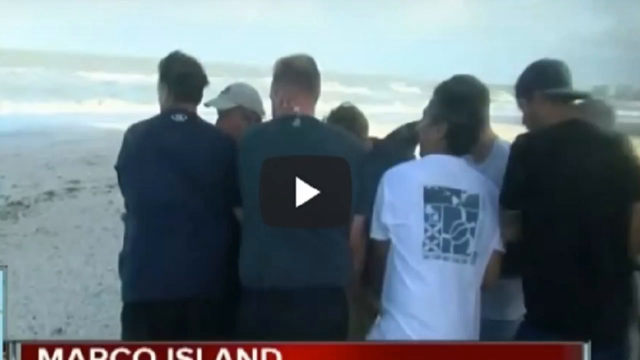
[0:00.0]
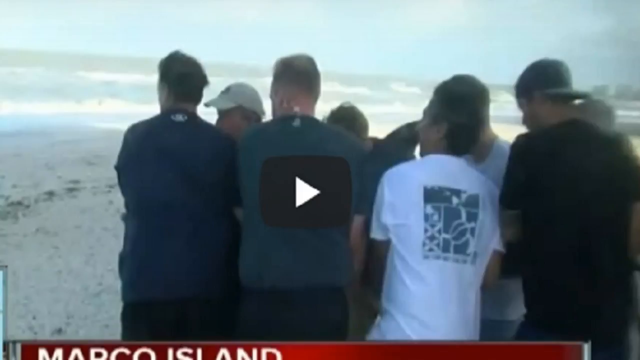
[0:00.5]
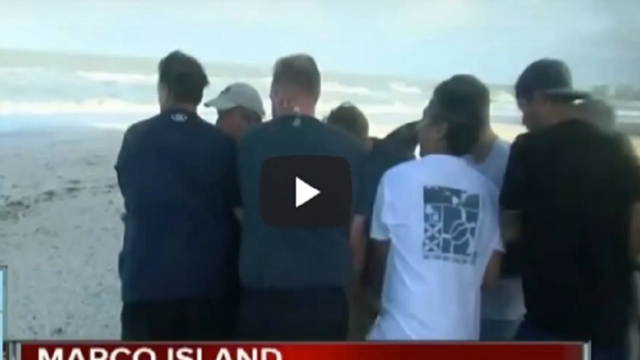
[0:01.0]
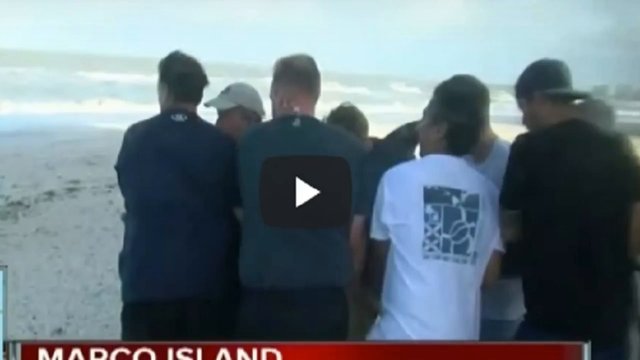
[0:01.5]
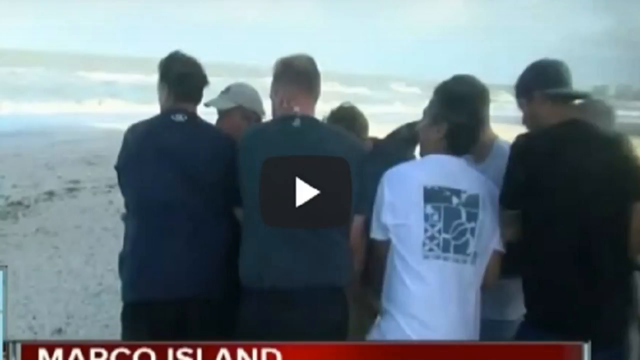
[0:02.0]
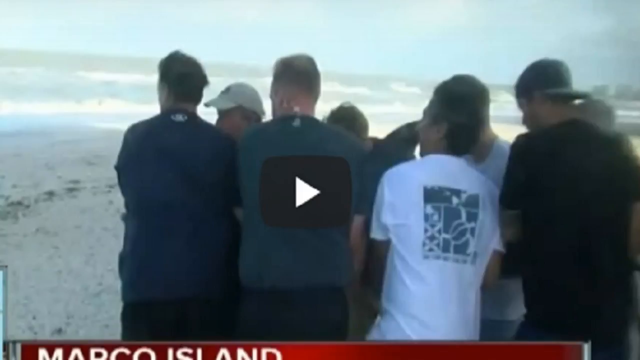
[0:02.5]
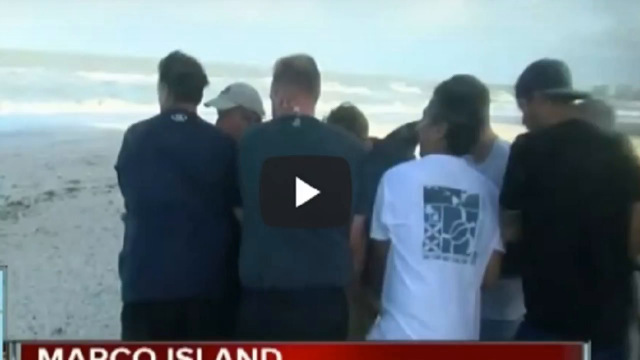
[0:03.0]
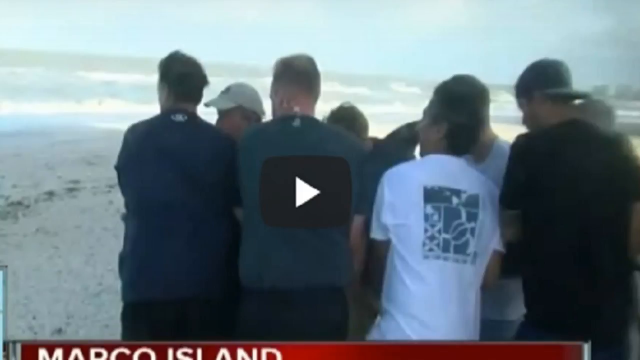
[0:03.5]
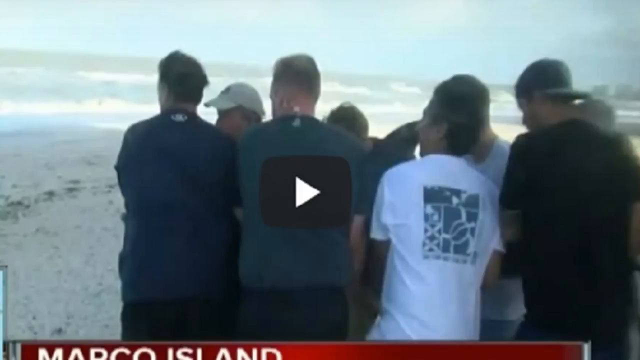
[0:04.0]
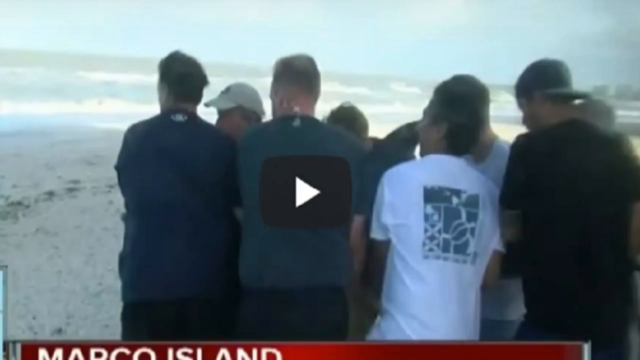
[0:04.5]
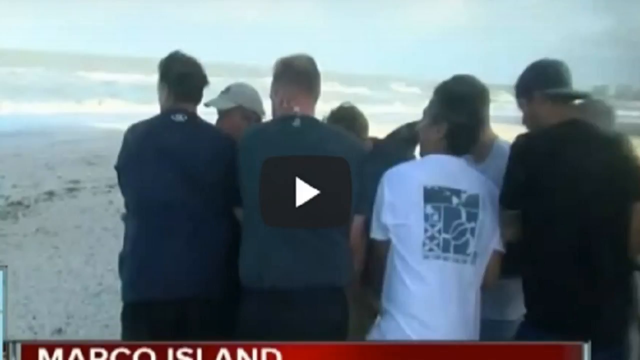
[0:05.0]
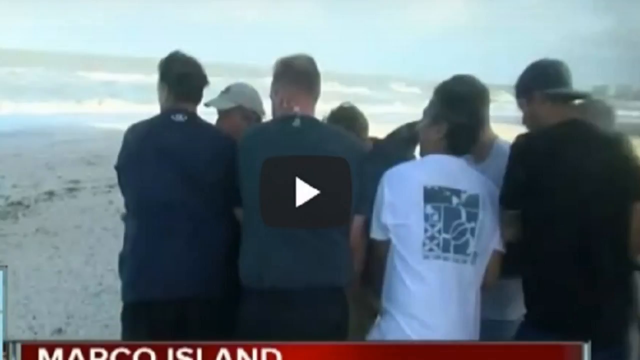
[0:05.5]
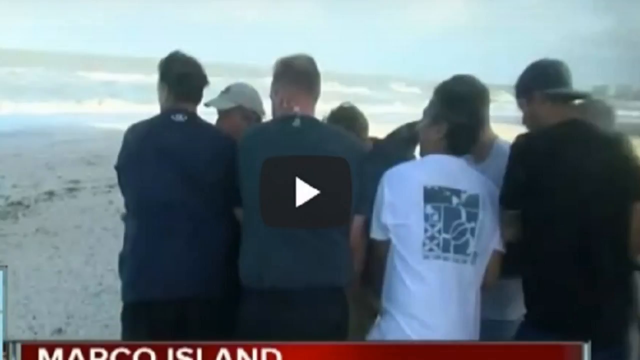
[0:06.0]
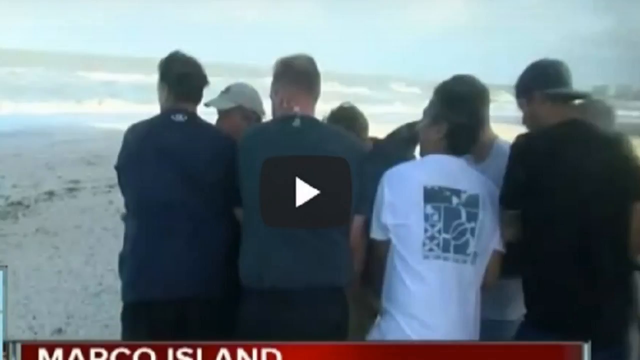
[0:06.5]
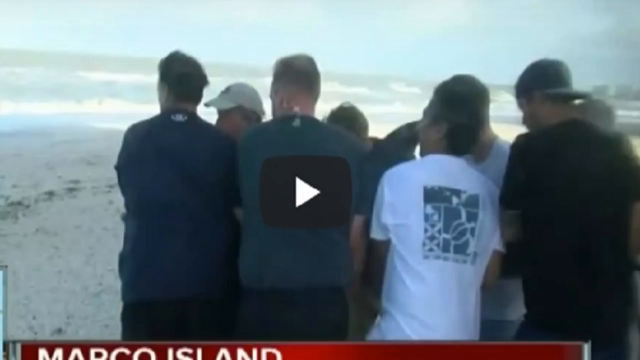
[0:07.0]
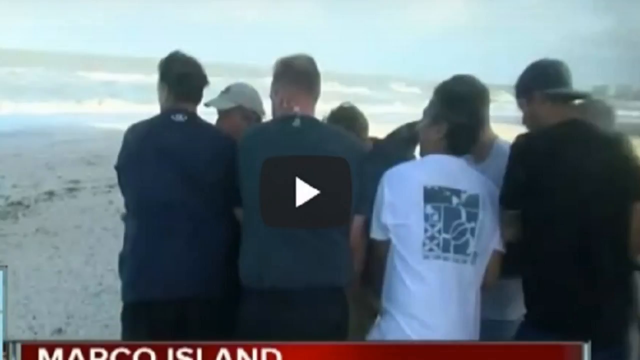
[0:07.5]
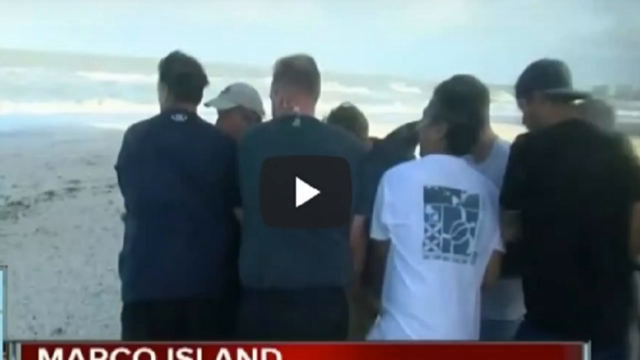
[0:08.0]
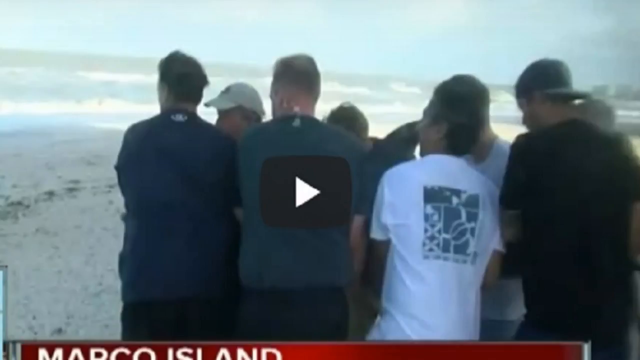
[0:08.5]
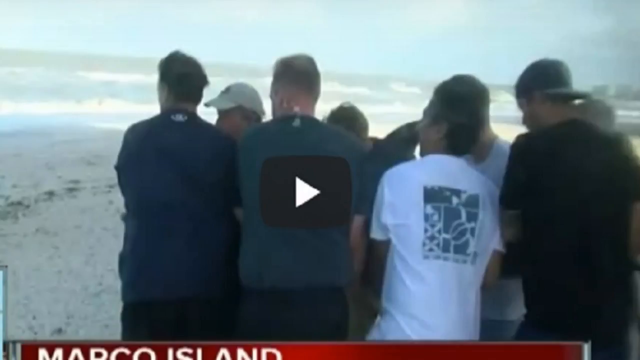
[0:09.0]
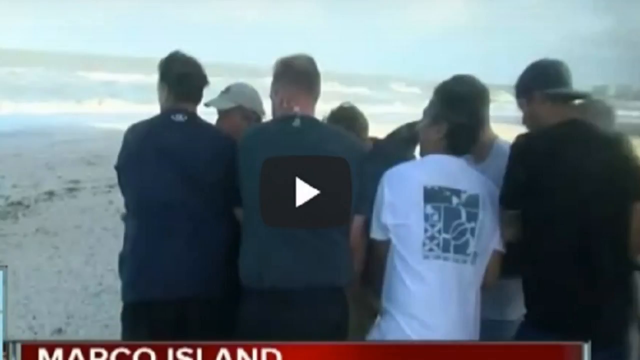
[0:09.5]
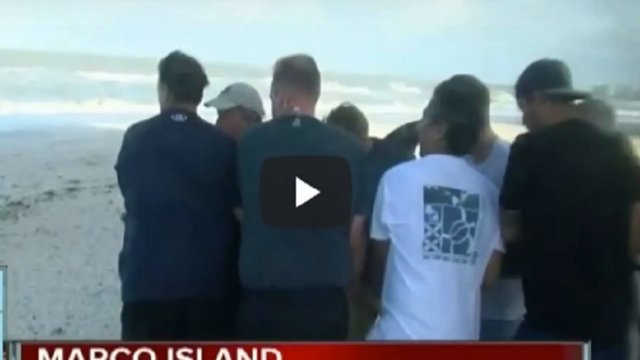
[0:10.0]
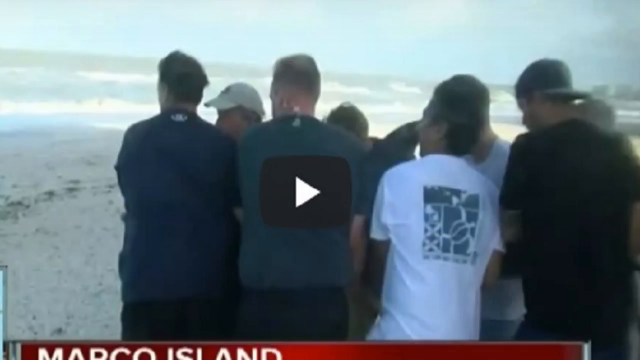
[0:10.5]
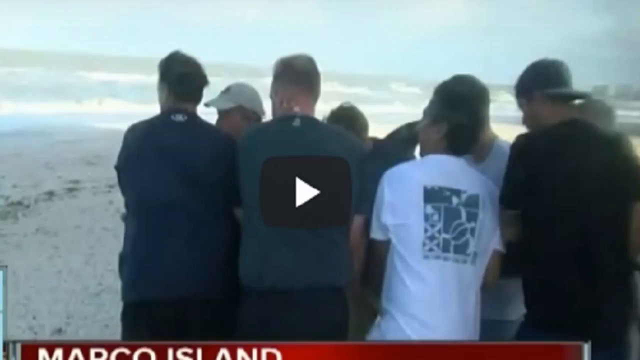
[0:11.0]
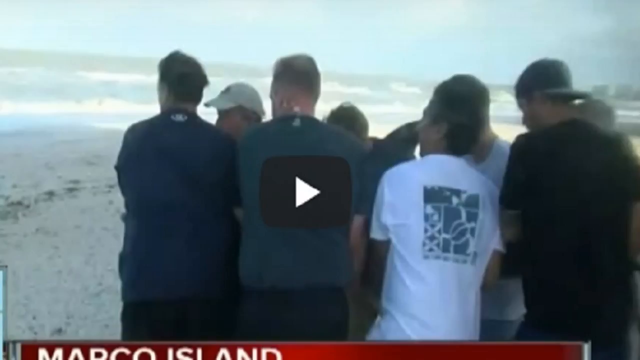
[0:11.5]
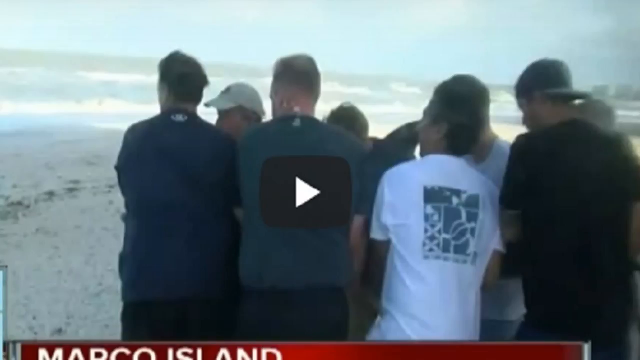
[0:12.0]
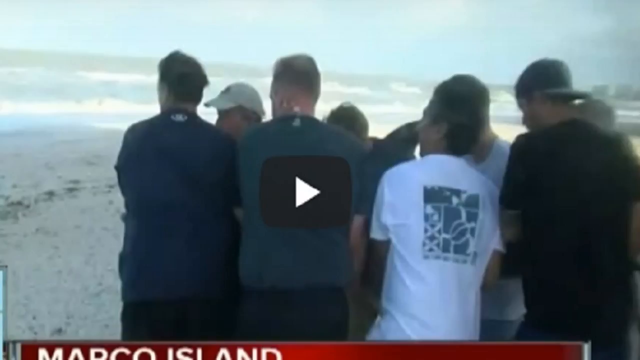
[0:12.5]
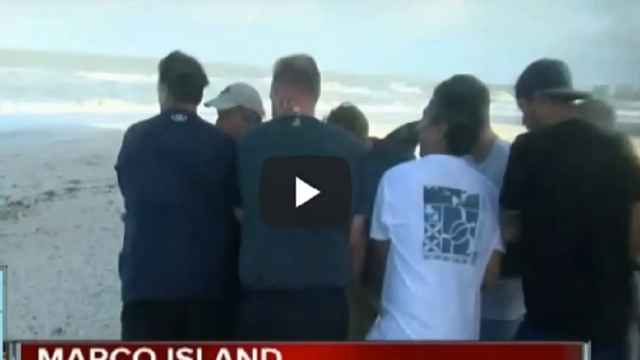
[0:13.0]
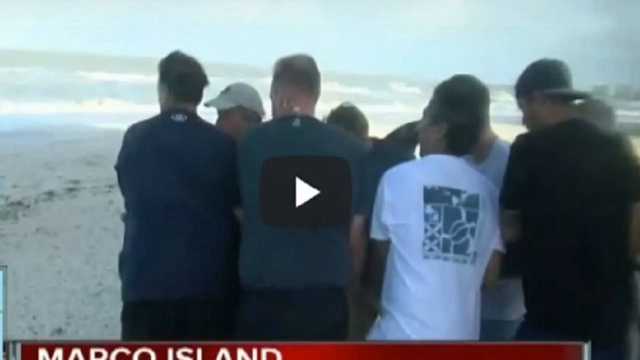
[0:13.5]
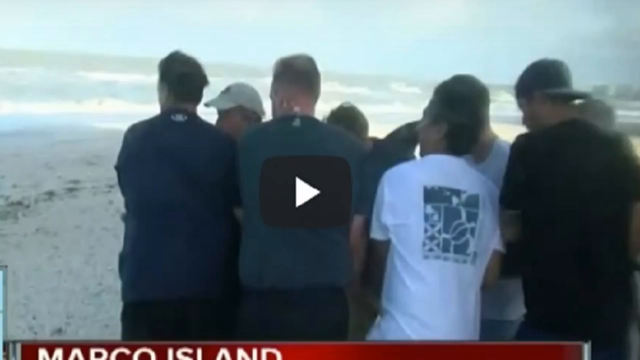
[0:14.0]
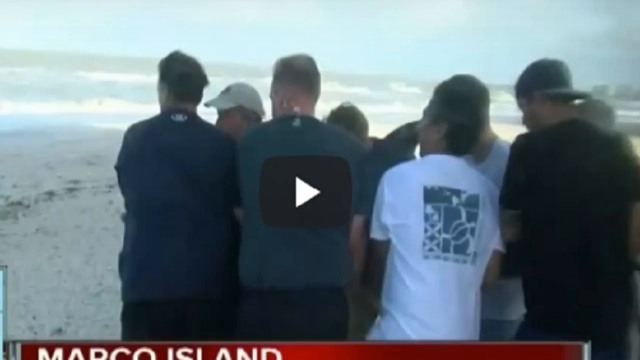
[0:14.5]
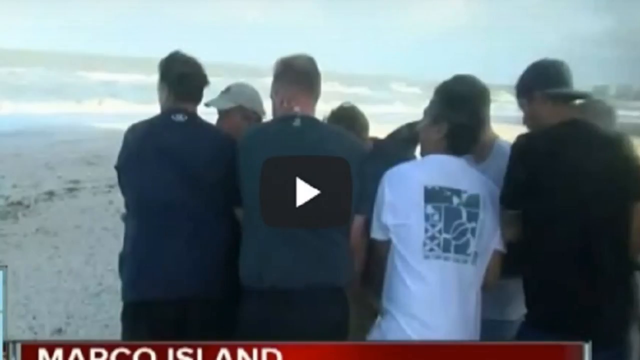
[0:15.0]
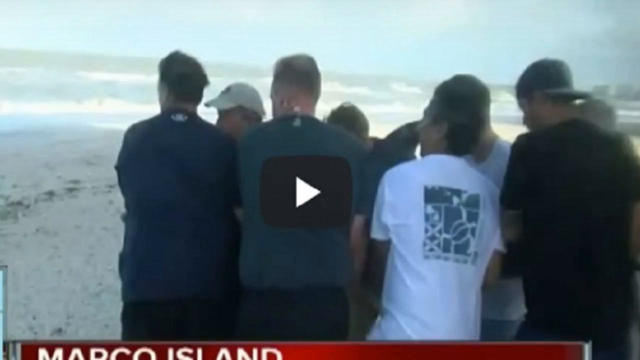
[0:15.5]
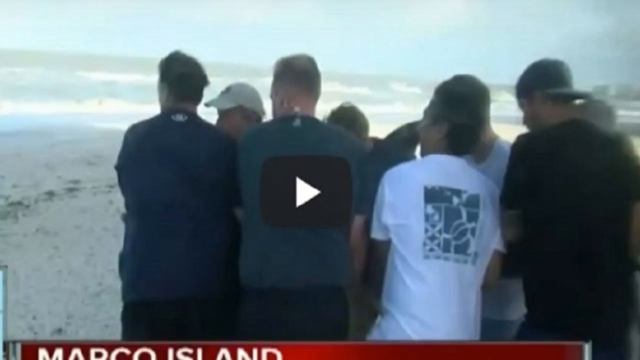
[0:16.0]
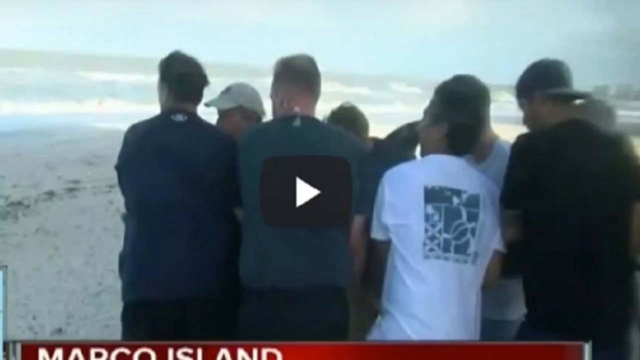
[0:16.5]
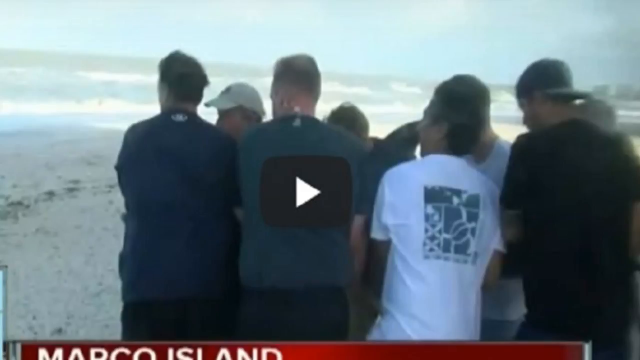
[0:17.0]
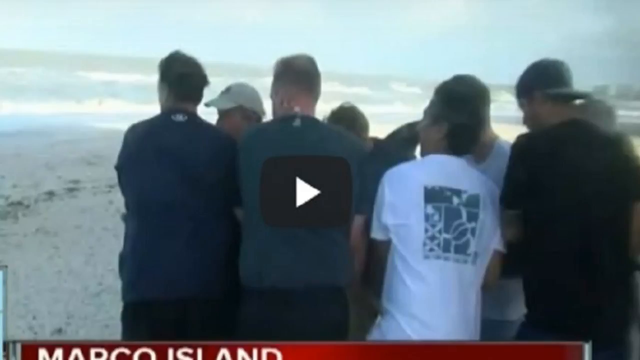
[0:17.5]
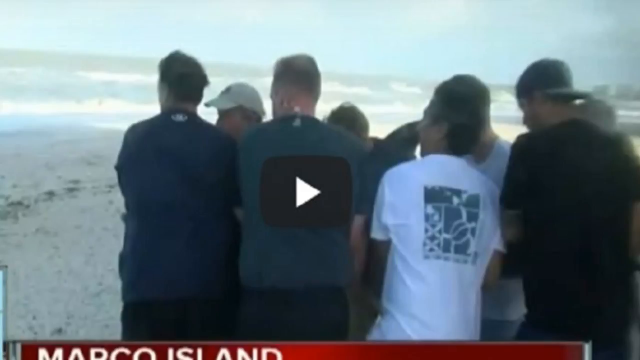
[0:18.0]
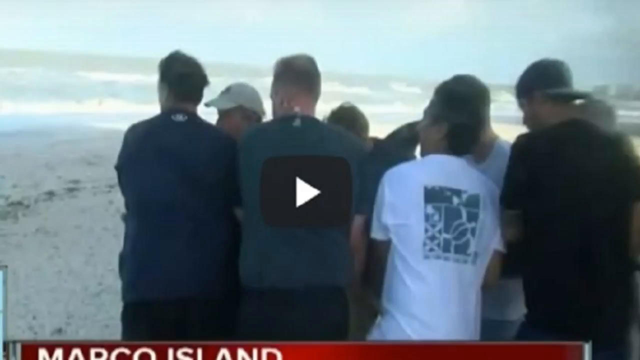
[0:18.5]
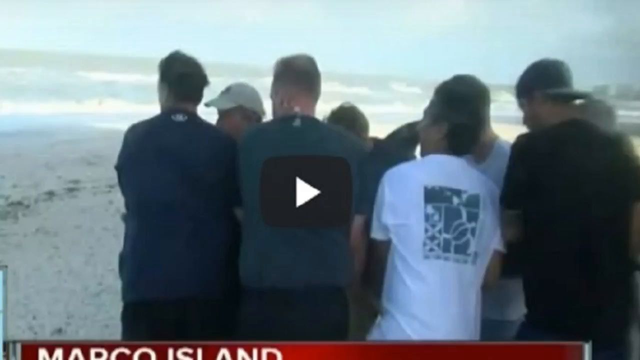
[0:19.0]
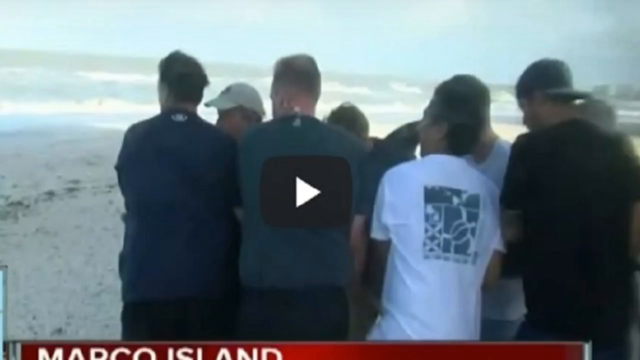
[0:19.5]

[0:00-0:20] The screen shows another video that has not been played, with a play button on it over a still photo from that video. At the bottom, on a red line and bar, text can just about be made out that says "Marco Island." The photo shows a group of people who appear to be on a beach. Most of them look to be males wearing shirts, mostly dark-colored; two wear white shirts, and two are also wearing hats. They appear to be looking out toward the sea and the waves coming at them. This view stays on screen for about 20 seconds.